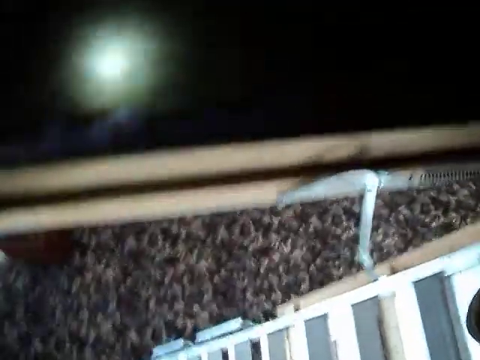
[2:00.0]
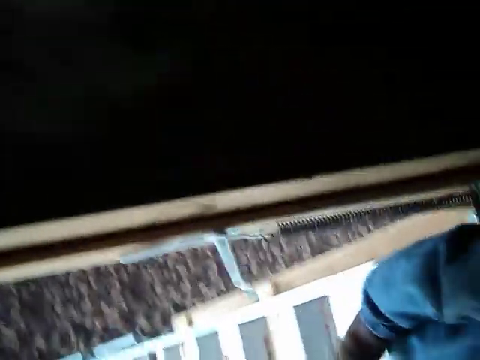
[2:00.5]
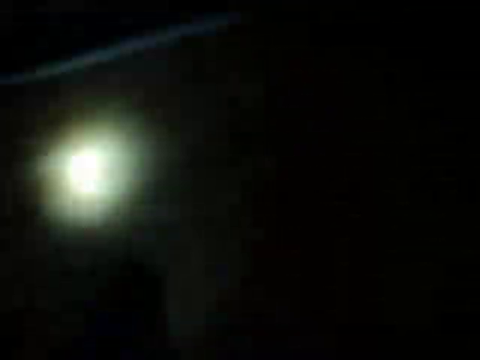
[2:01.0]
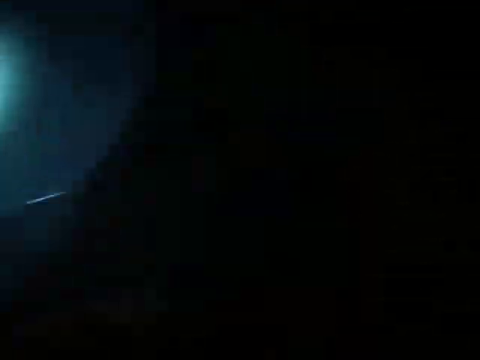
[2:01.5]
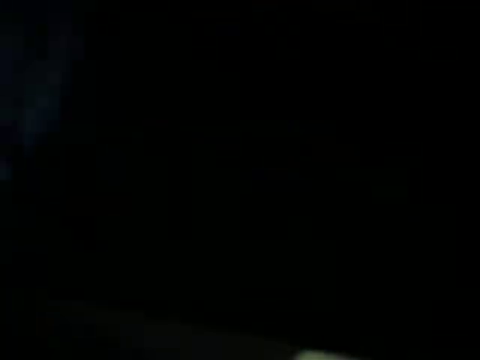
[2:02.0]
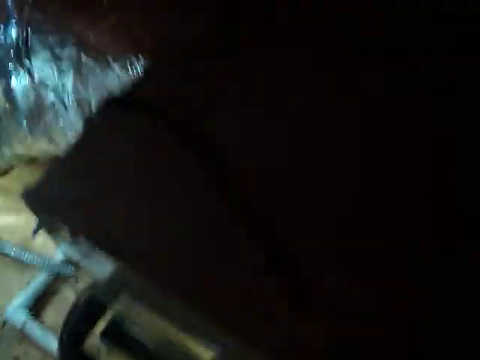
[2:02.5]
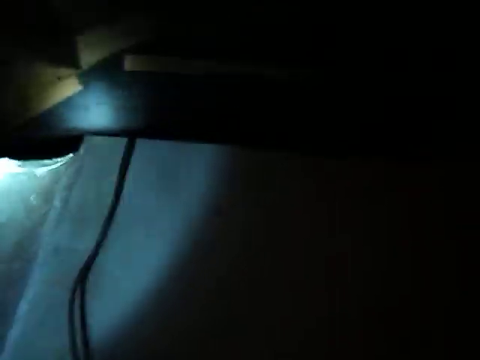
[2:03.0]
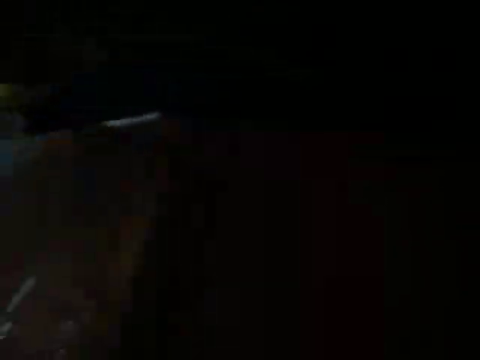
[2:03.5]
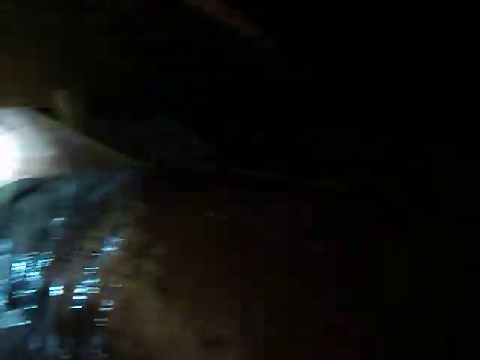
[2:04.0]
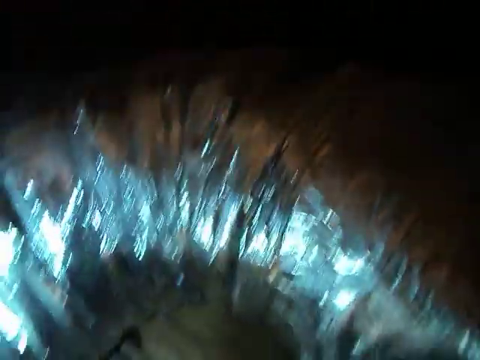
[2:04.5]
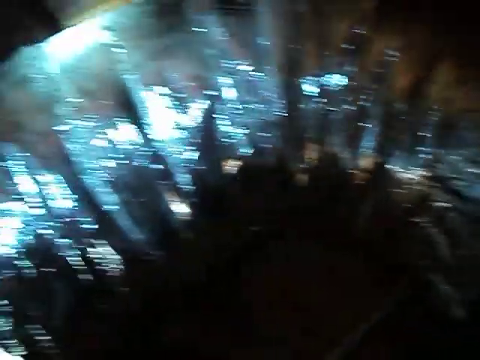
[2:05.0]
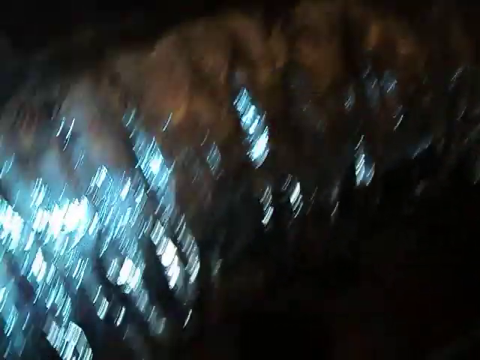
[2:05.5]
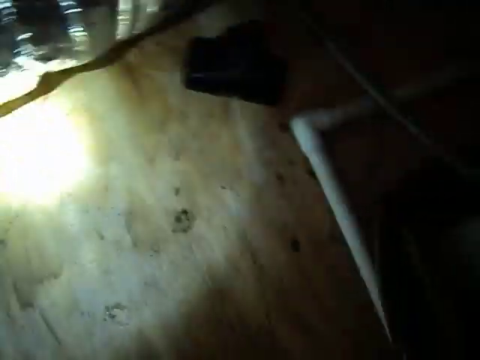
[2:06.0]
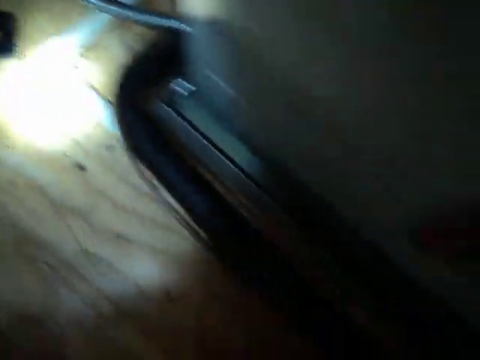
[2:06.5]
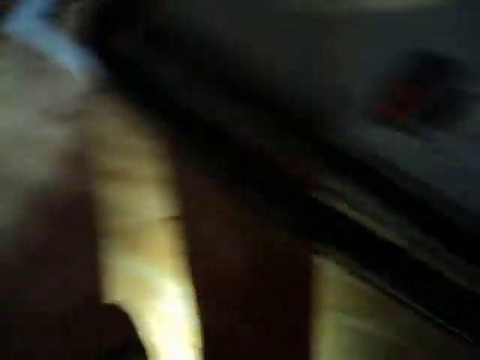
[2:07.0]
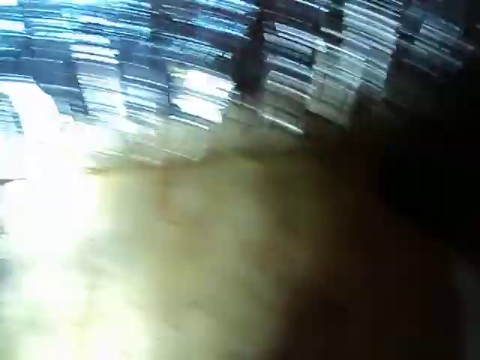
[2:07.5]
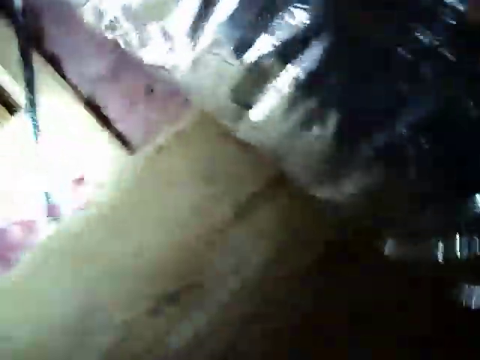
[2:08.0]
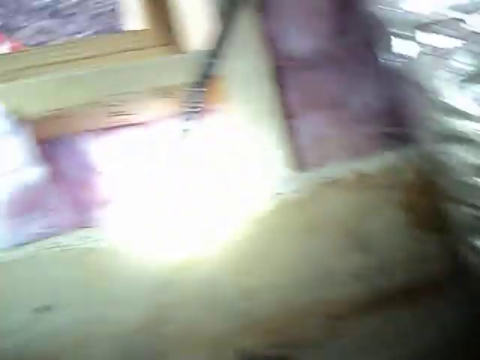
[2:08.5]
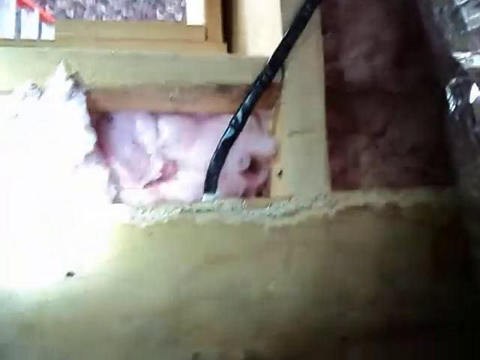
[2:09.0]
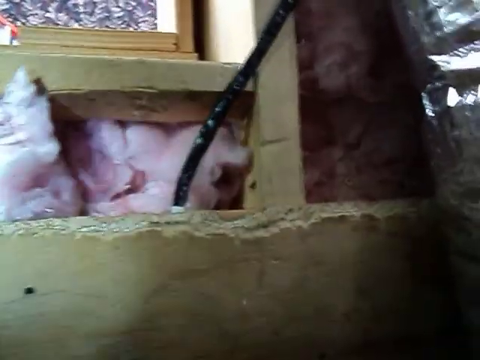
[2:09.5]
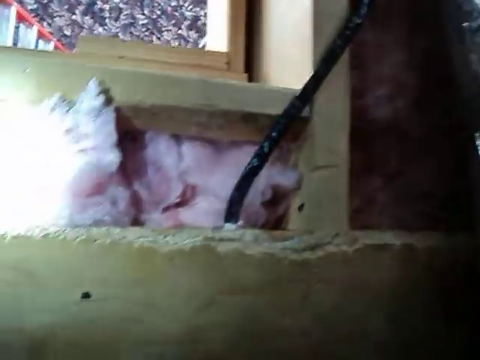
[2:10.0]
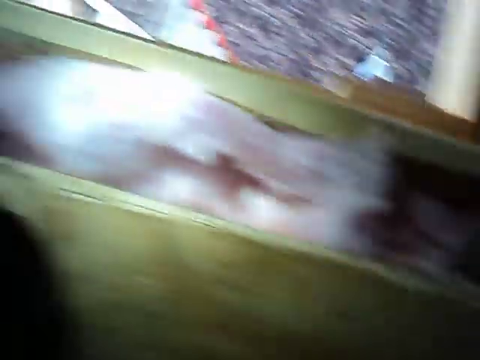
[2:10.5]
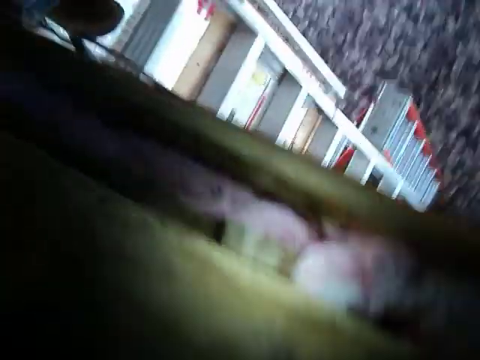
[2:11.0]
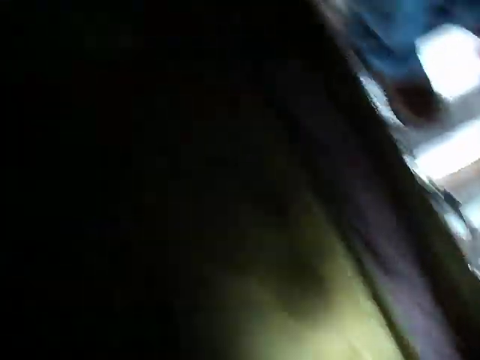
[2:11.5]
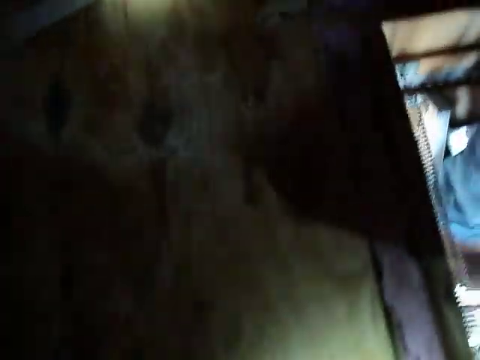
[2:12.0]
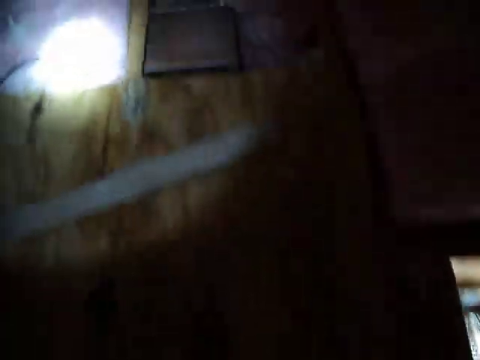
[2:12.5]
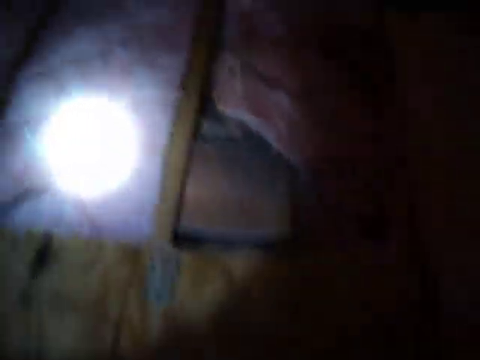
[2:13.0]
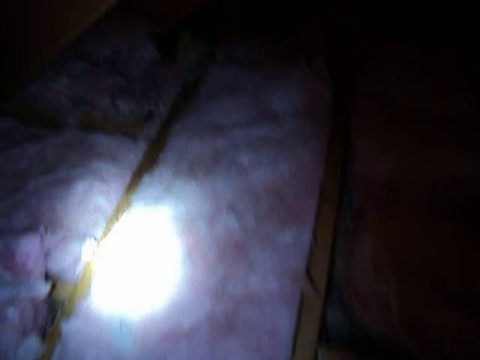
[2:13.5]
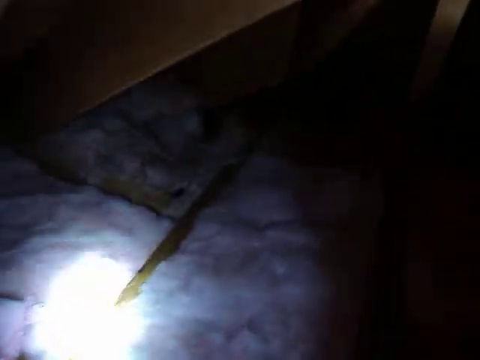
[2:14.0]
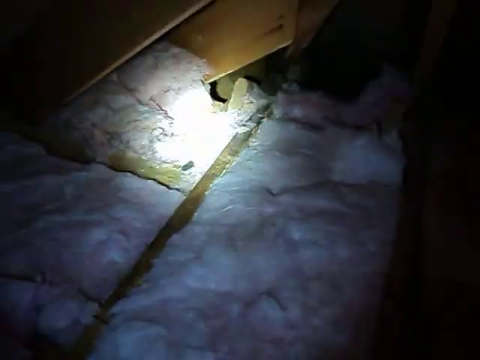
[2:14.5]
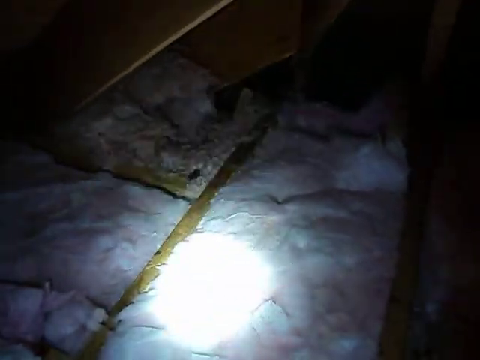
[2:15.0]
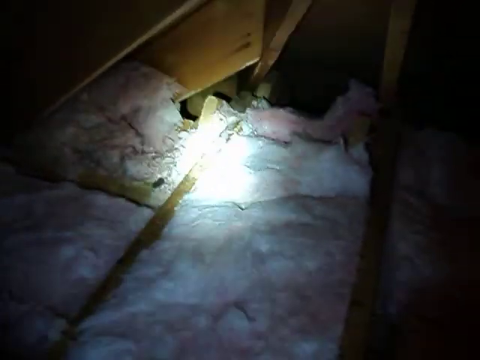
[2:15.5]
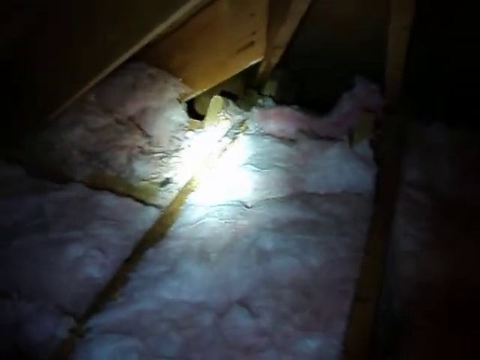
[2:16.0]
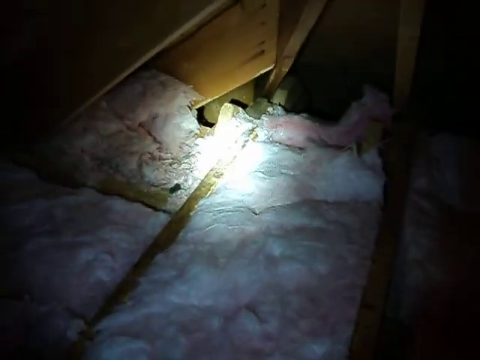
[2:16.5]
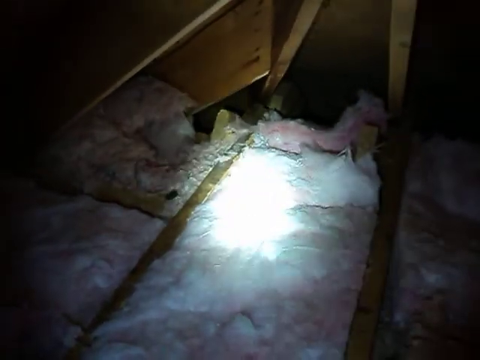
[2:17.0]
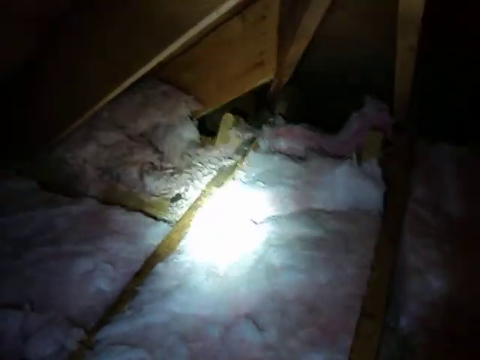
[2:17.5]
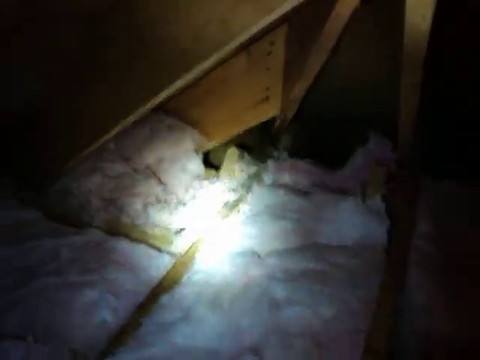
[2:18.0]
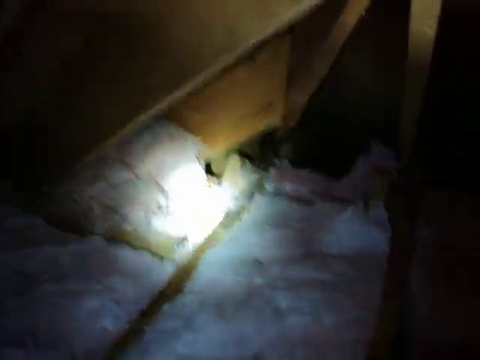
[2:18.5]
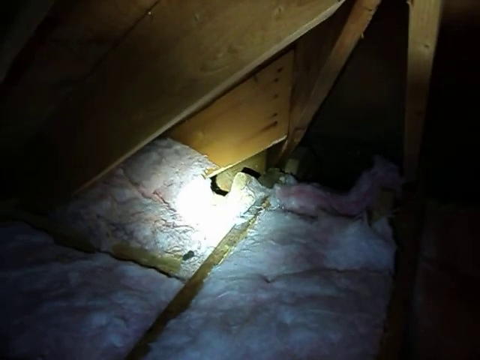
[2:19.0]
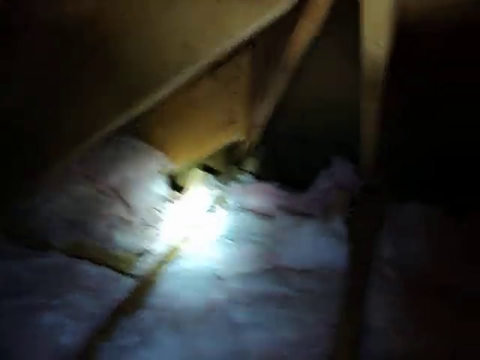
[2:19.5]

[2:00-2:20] Someone holds a camera in a dark attic, using a flashlight, and the footage is super shaky as the light moves around. There are glimpses of the plywood floor of the attic and a little flash of silver from the HVAC ducts. The camera moves around pretty rapidly and is very dizzying. The light keeps illuminating the batt insulation between the floor joists. The person is near the door that goes back into the house, so there are glimpses of the ladder positioned on the opening of the attic hole and of wallpaper in the room below. Mostly the flashlight bounces around inside the attic, moving erratically across the pink insulation.